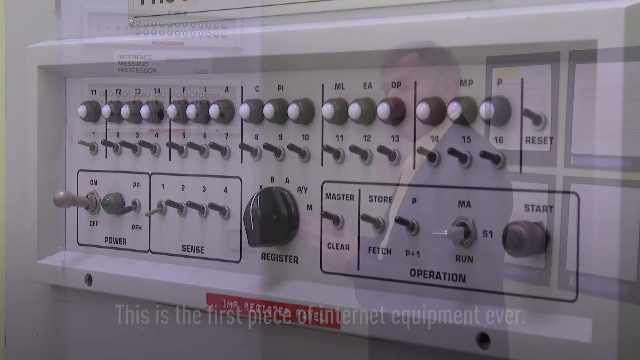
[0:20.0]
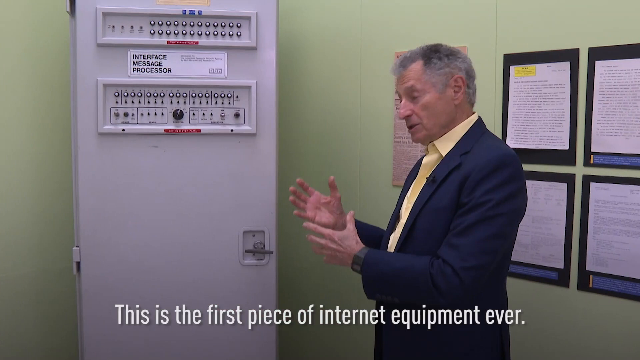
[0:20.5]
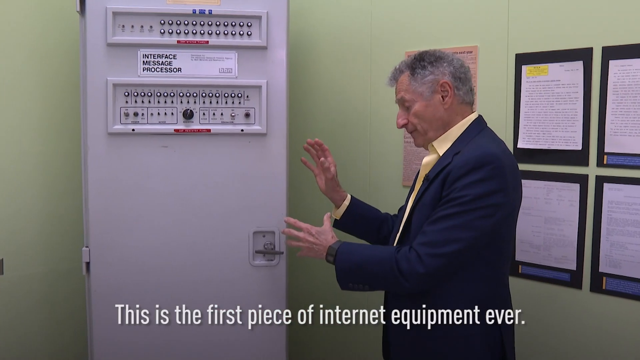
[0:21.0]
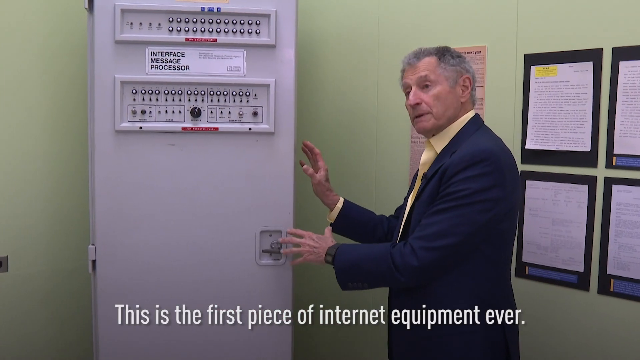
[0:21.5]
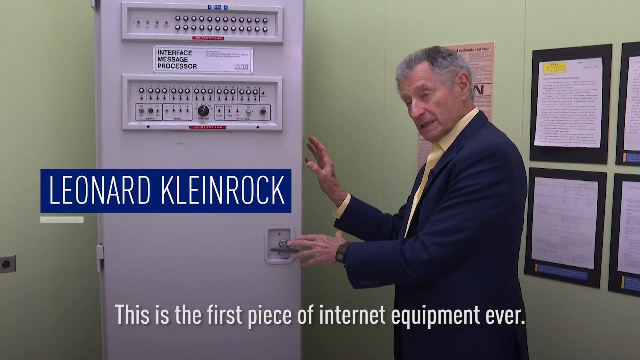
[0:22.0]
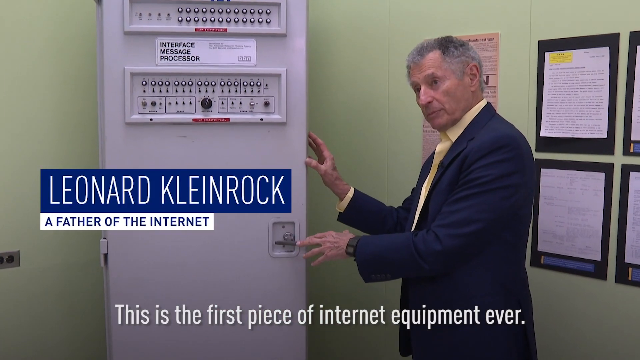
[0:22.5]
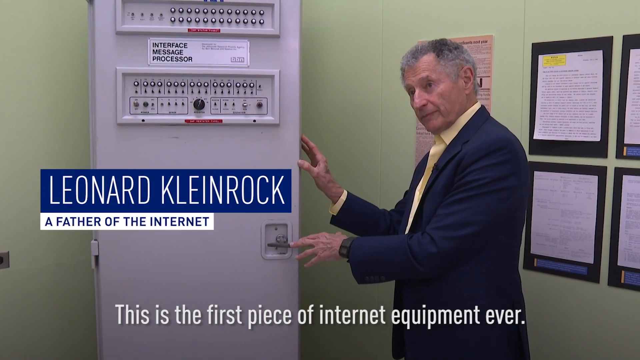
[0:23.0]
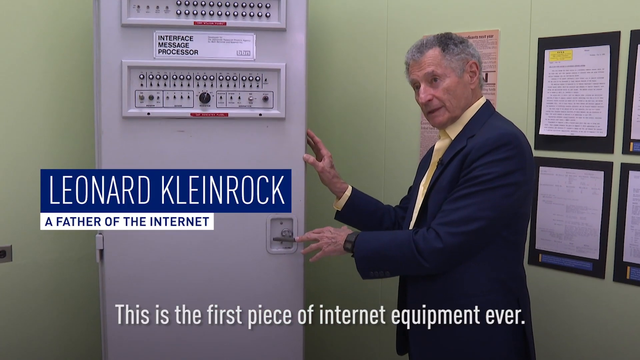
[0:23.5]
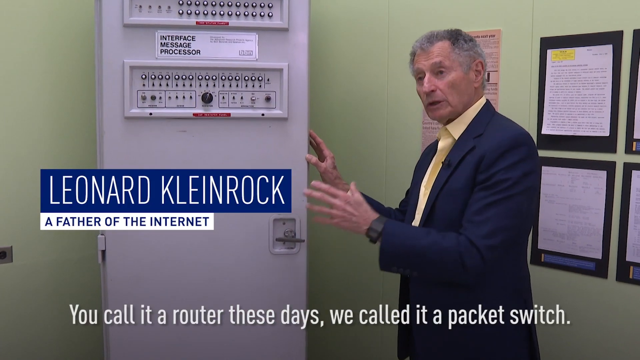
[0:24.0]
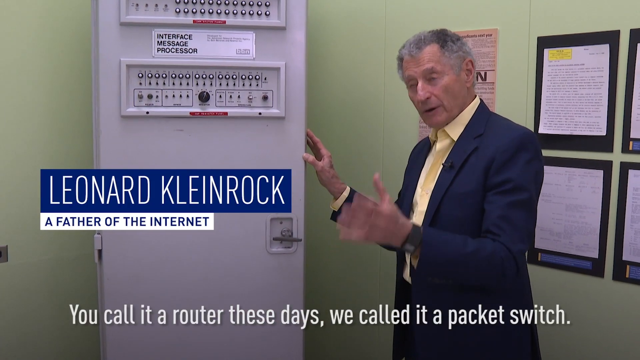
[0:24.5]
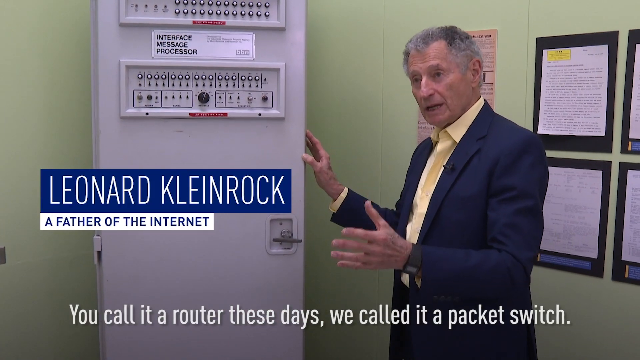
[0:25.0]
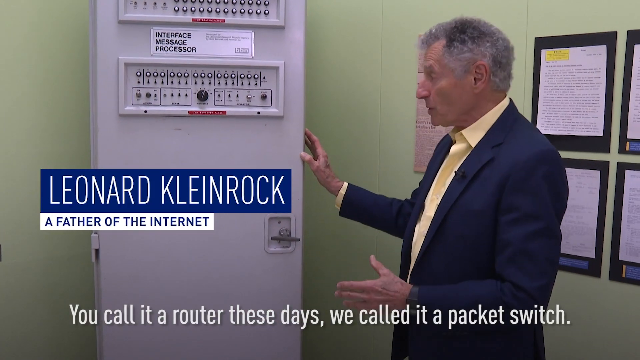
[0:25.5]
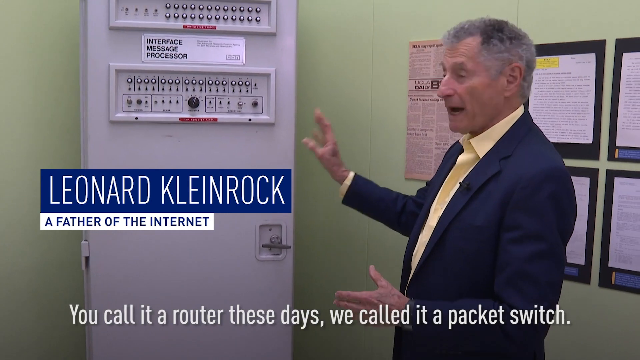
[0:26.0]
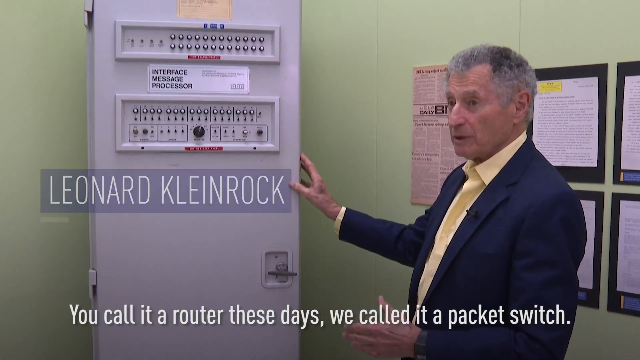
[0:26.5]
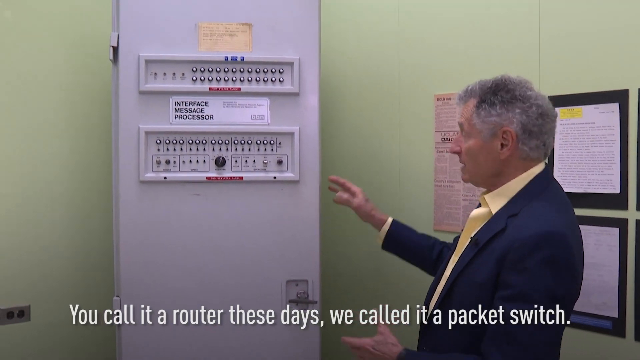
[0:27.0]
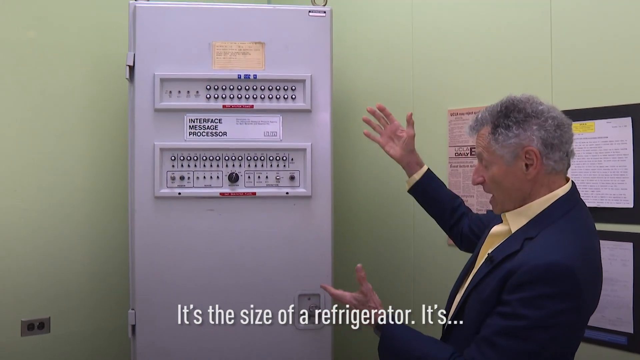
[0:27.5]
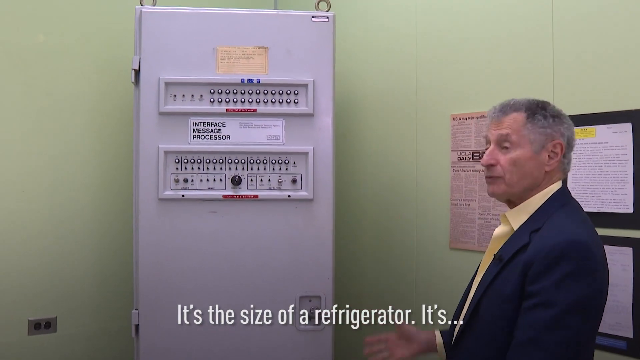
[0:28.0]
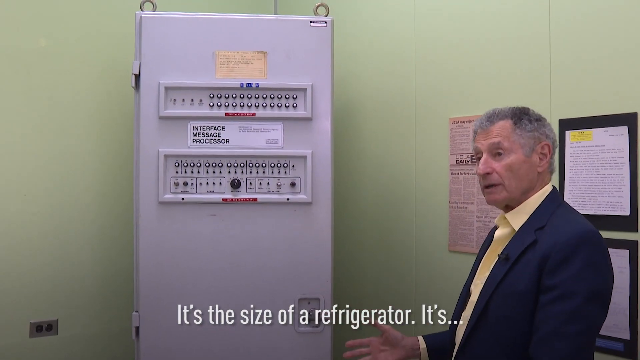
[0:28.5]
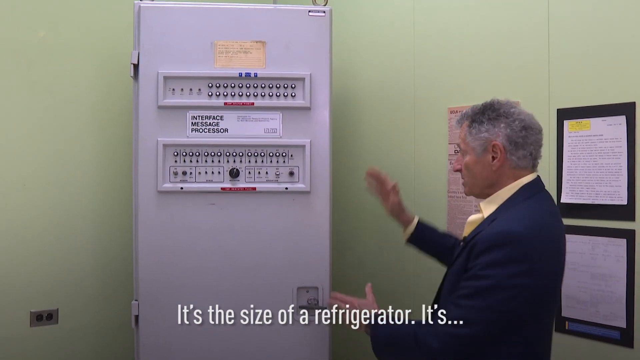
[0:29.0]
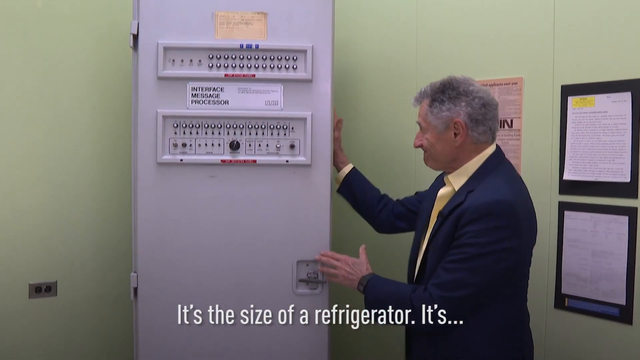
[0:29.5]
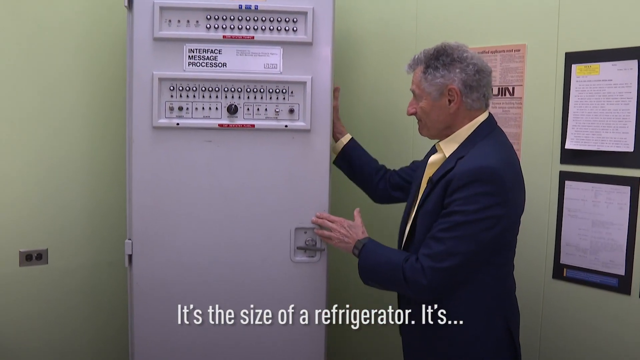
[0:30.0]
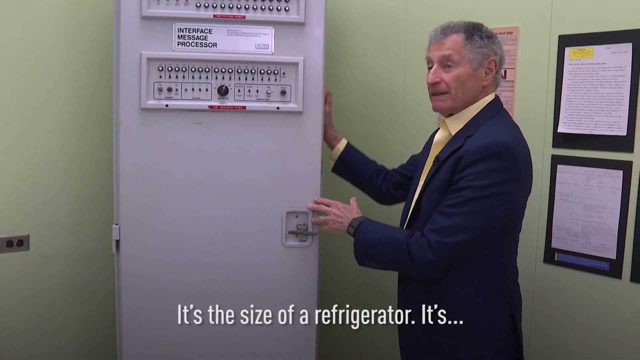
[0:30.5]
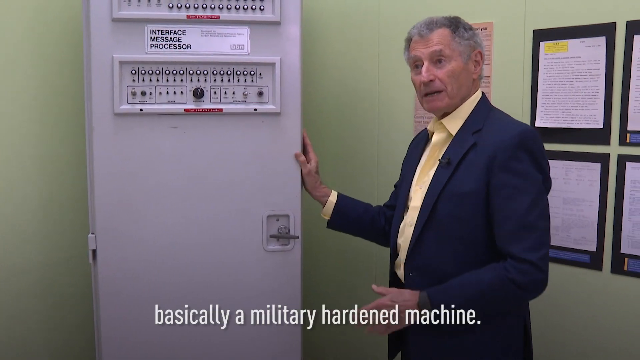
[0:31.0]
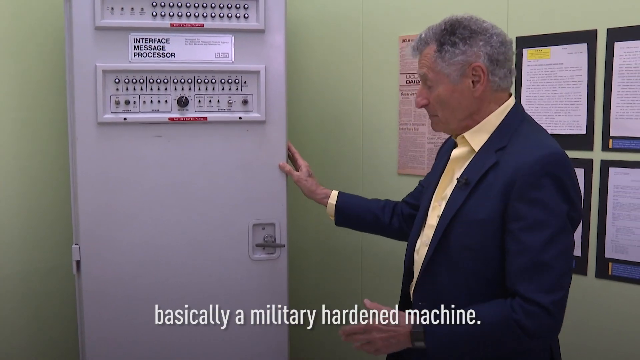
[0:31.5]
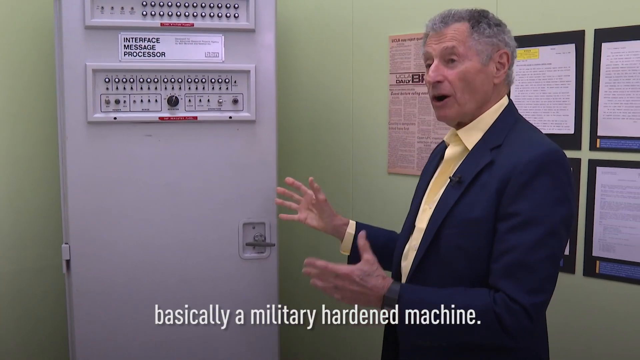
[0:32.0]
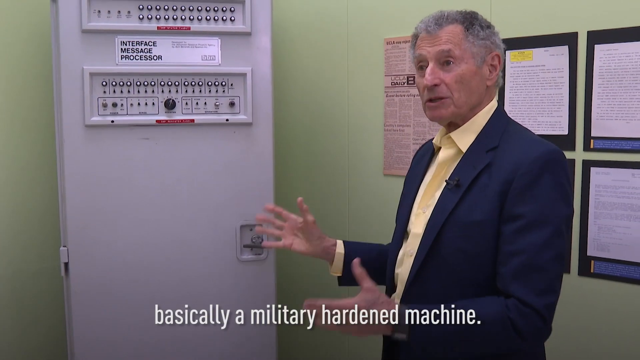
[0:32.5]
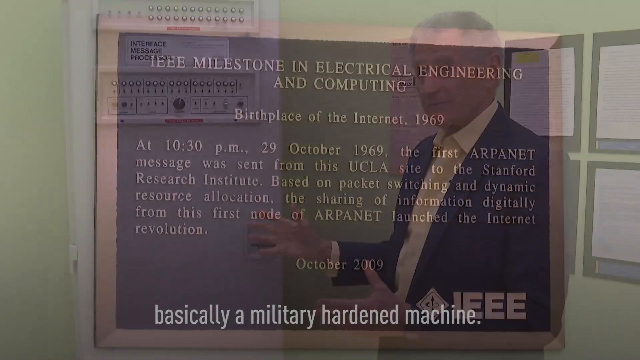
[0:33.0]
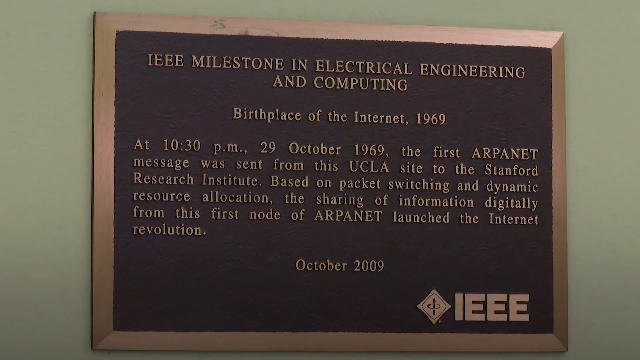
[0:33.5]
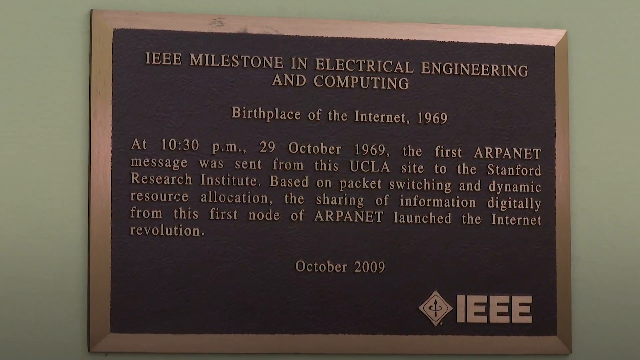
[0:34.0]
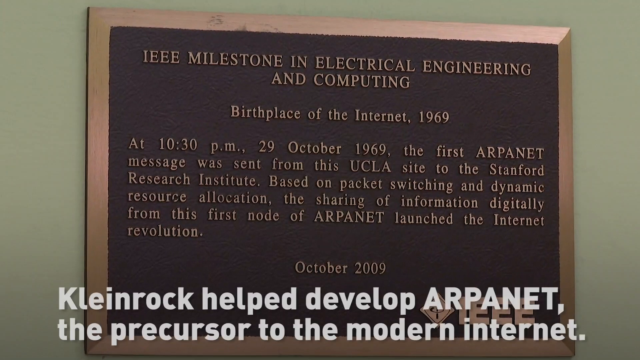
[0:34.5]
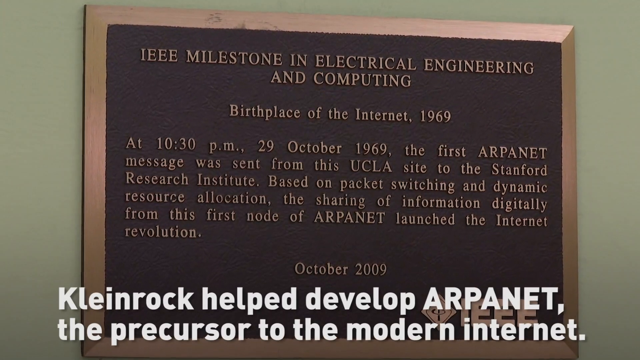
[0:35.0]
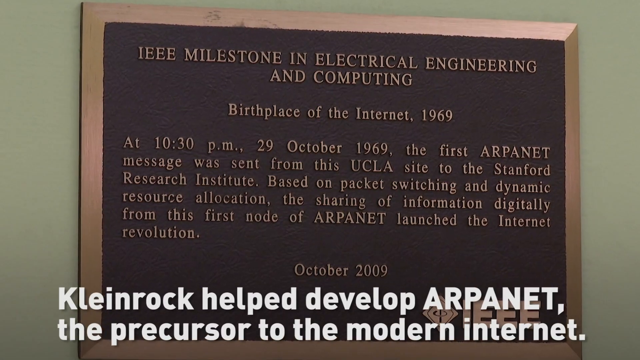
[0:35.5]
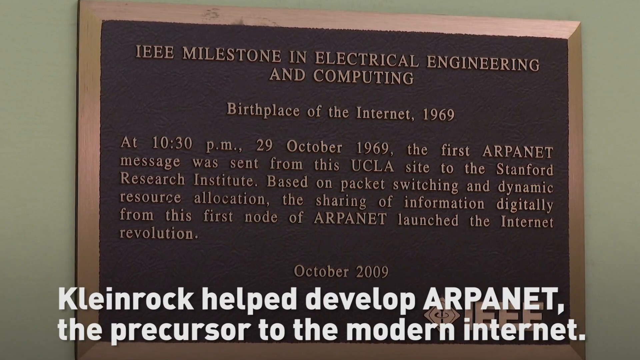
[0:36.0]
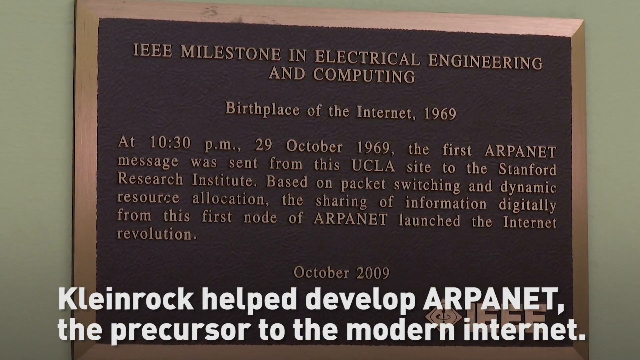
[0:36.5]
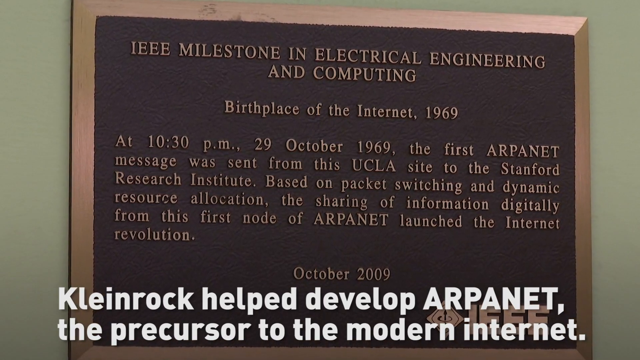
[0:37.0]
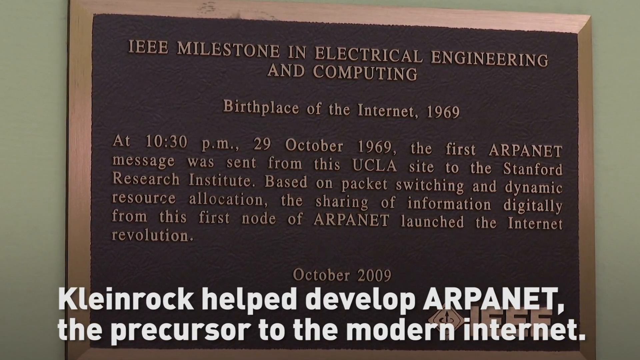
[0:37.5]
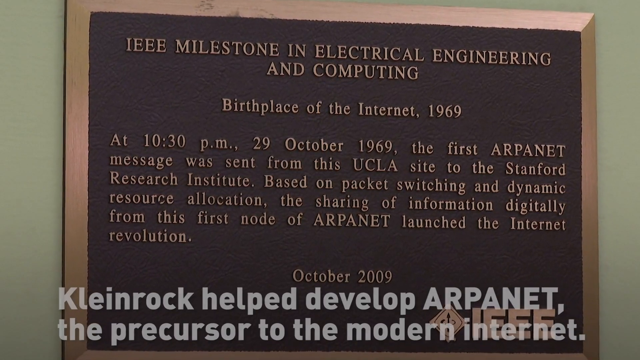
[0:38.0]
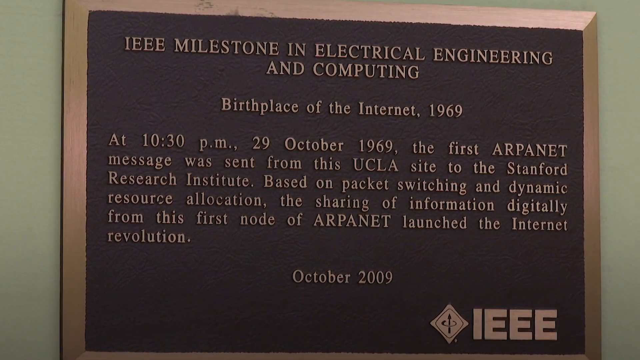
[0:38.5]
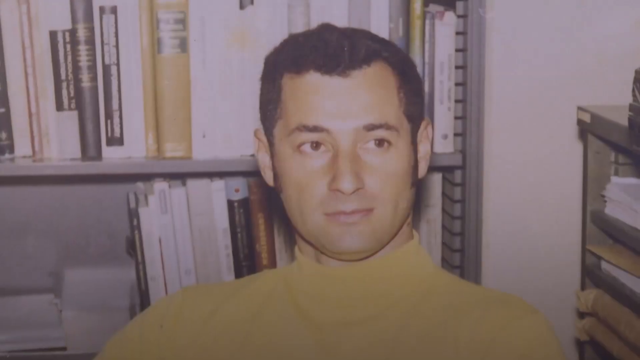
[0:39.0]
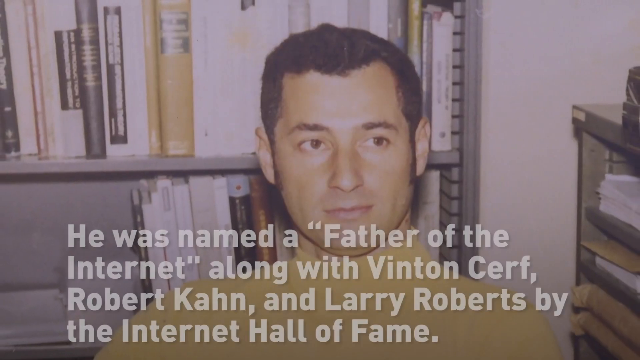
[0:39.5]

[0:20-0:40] A close-up shows the white control panel of an old computer. At the top is a row of 16 black buttons with white centers, with a black switch below each button. Below that is a large black dial in the center, with additional switches on the left and on the right. Captions appear at the bottom of the screen, and the scene shifts to a man standing on the right side of a large white machine that looks like a computer and is taller than he is. He gestures with his hands toward the computer while speaking to someone off camera to the left. A blue text box next to him reads "Leonard Kleinrock, A father of the internet," and the caption at the bottom says, "This is the first piece of internet equipment ever. You call it a router these days, we called it a packet switch." He places his right hand on the white tower. The caption changes to "It's the size of a refrigerator. It's basically a military hardened machine," and he slaps his right hand against the machine. The scene switches to a close-up of a plaque stating that the first ARPANET message was sent from this room on October 29, 1969. A caption across the bottom reads, "Kleinrock helped develop ARPANET the precursor to the modern internet."